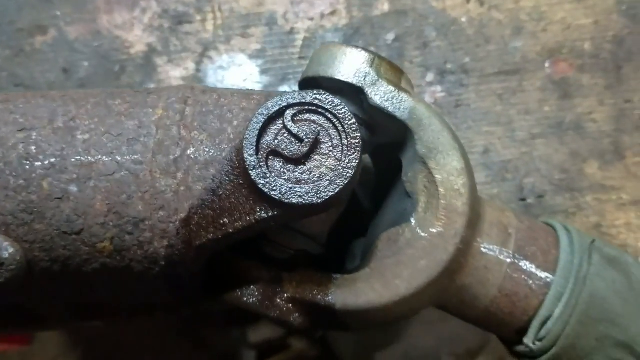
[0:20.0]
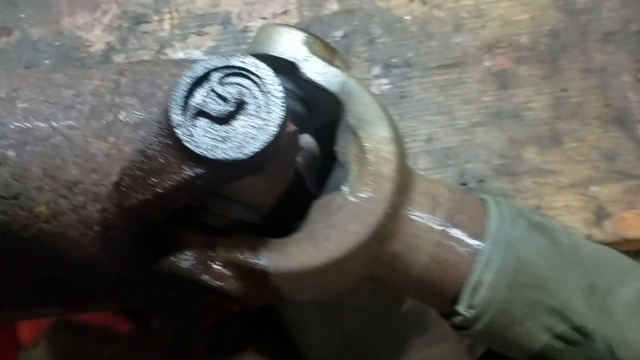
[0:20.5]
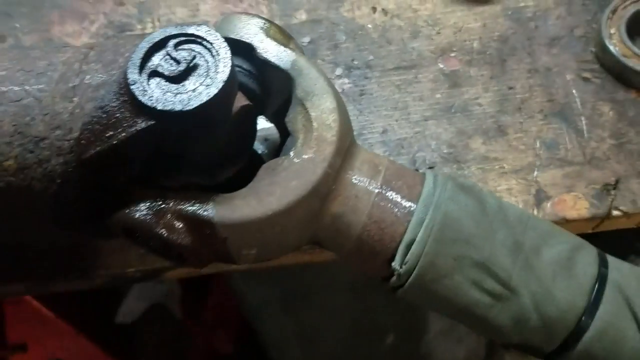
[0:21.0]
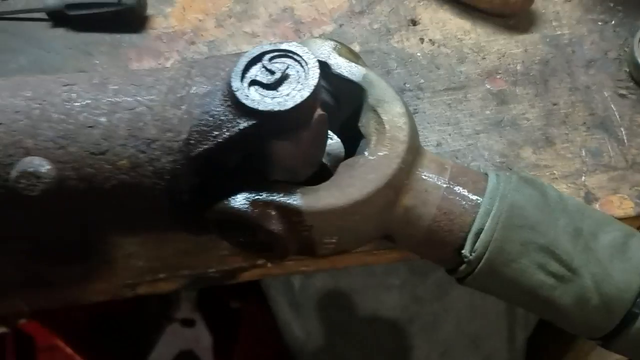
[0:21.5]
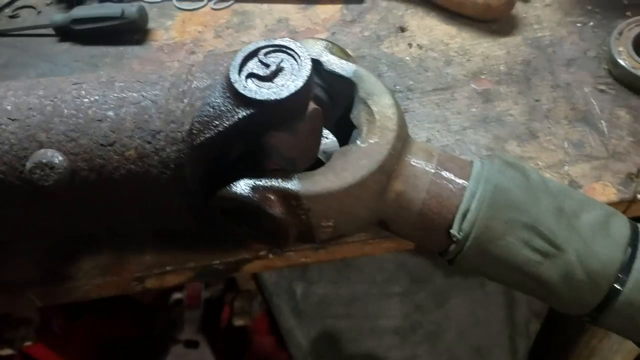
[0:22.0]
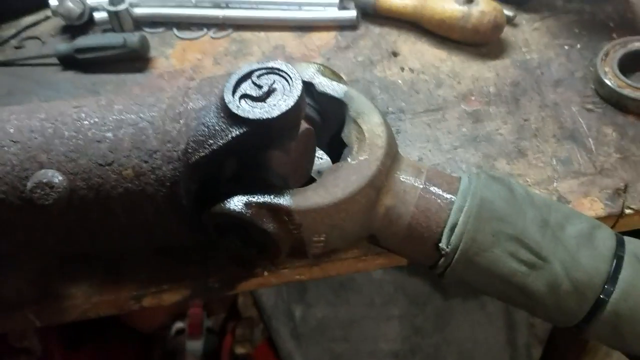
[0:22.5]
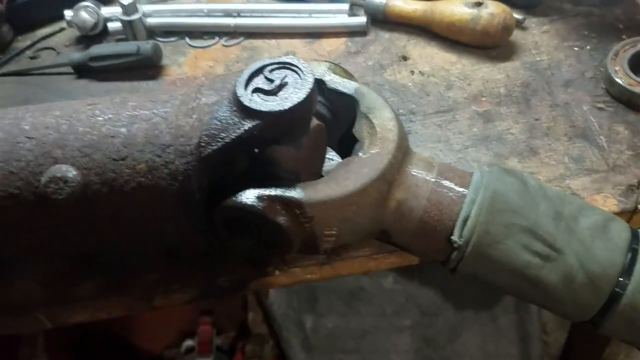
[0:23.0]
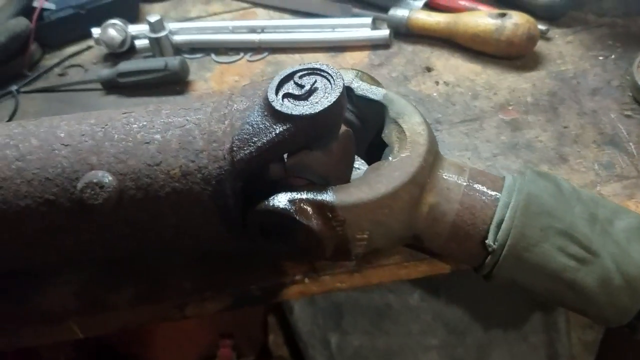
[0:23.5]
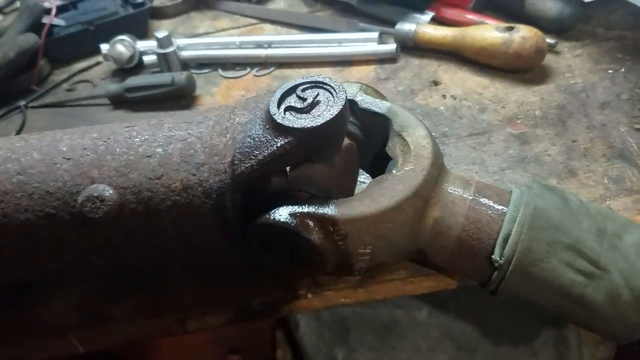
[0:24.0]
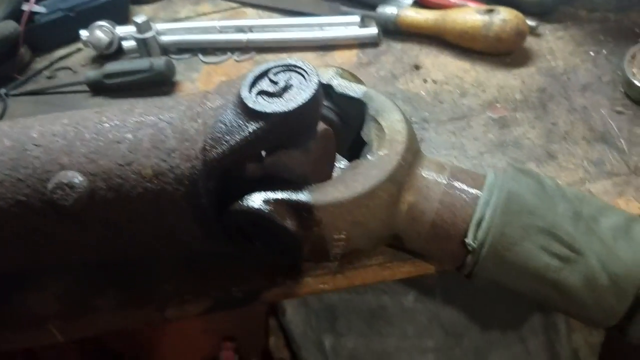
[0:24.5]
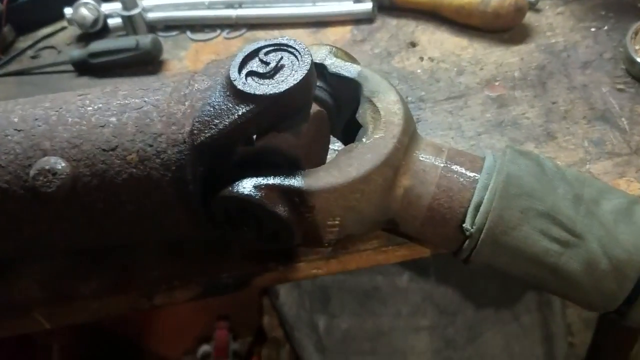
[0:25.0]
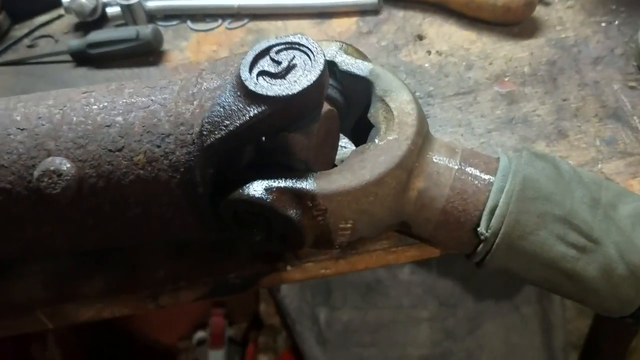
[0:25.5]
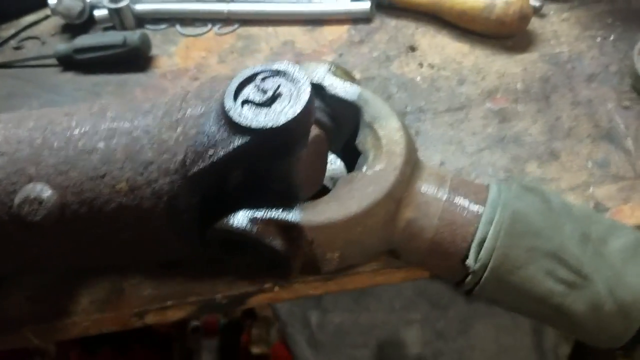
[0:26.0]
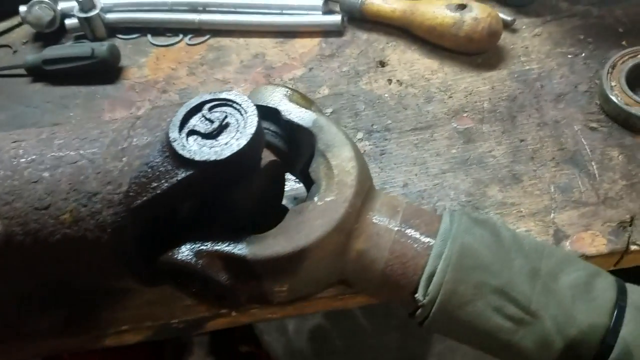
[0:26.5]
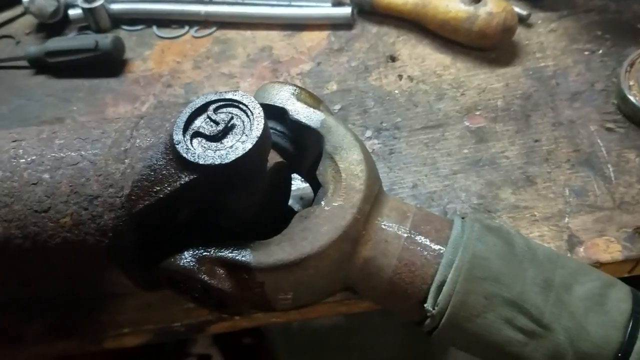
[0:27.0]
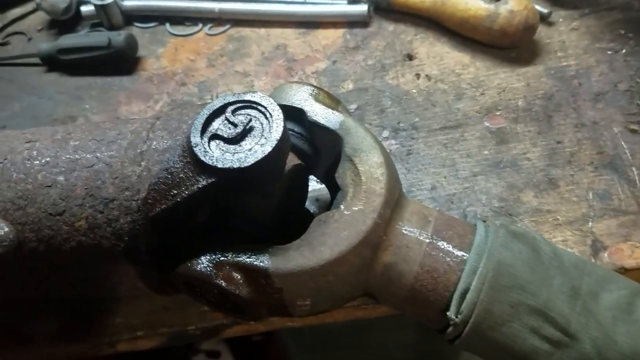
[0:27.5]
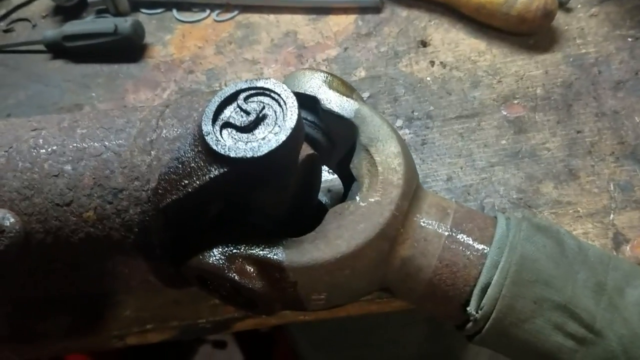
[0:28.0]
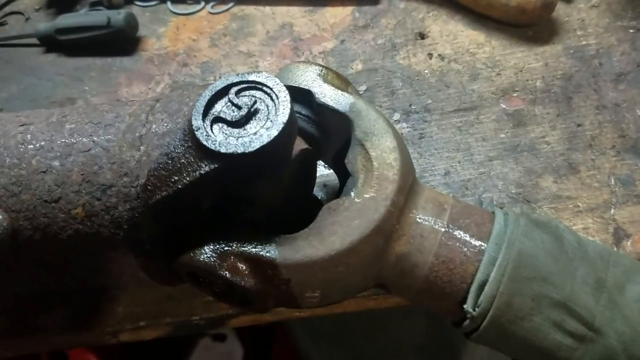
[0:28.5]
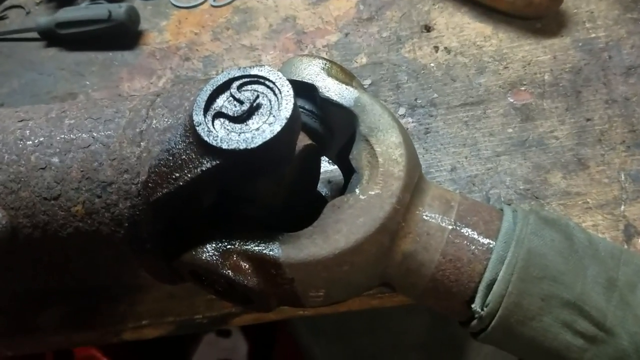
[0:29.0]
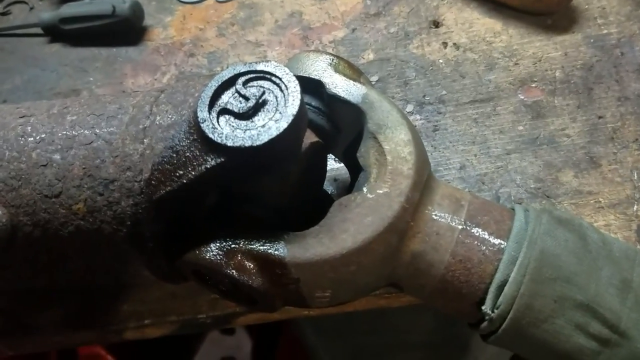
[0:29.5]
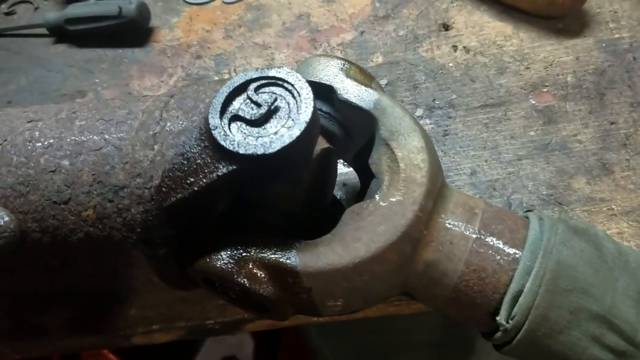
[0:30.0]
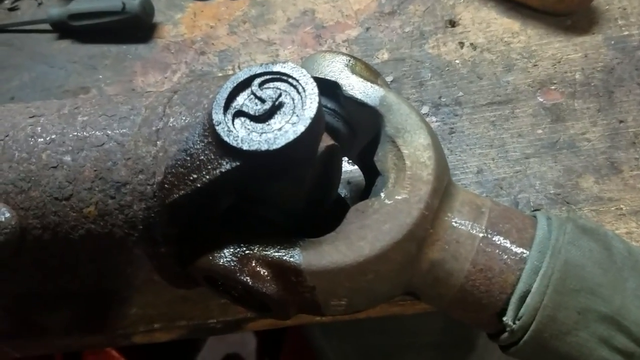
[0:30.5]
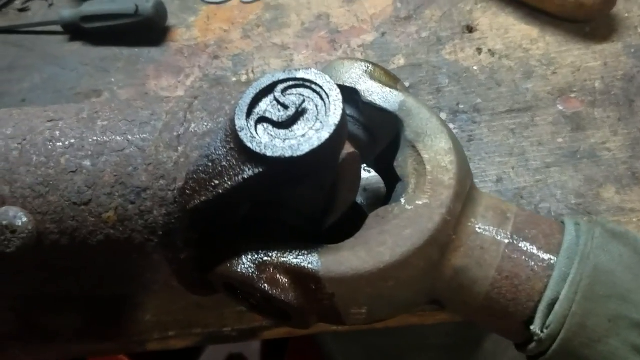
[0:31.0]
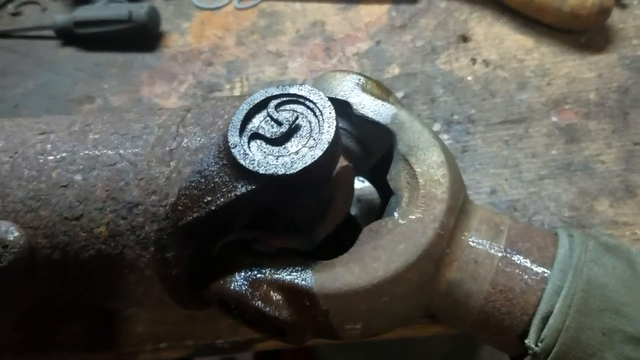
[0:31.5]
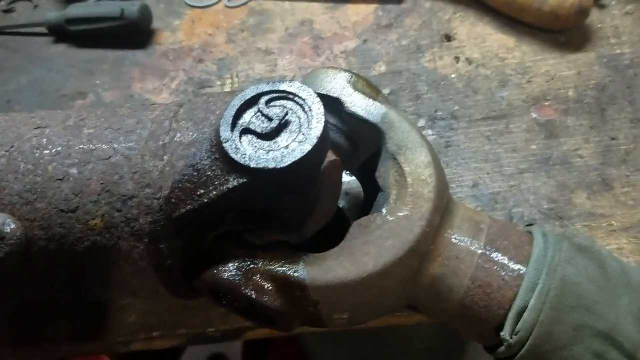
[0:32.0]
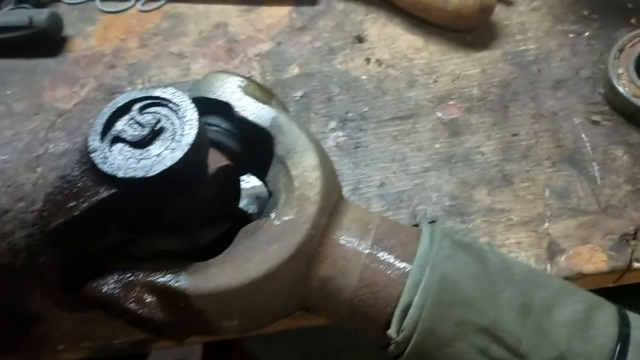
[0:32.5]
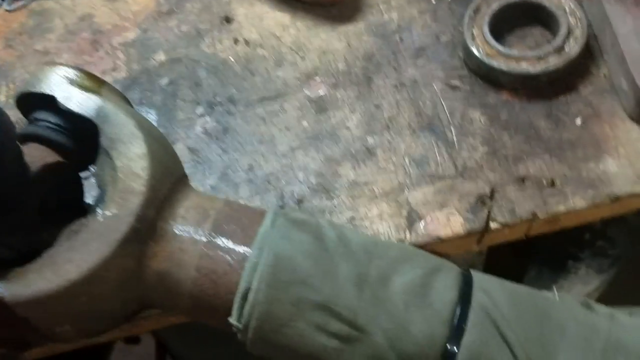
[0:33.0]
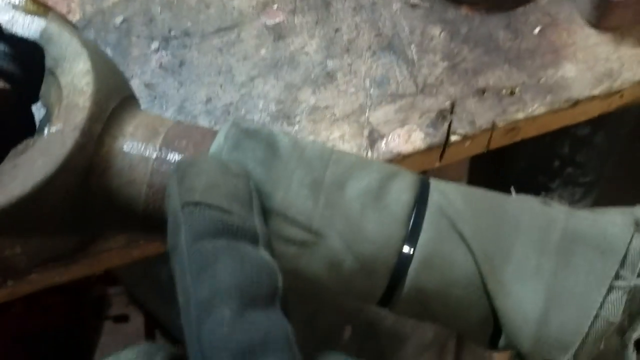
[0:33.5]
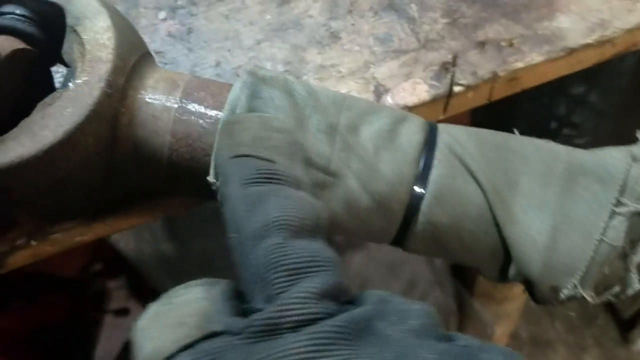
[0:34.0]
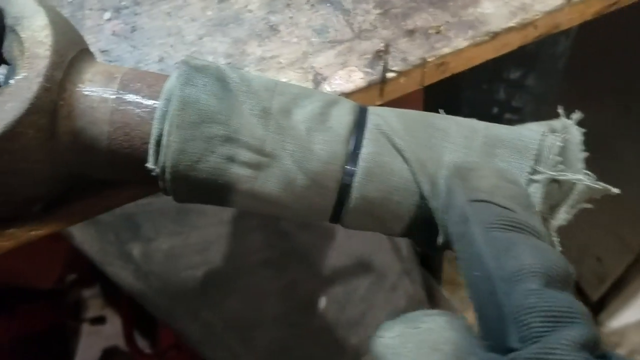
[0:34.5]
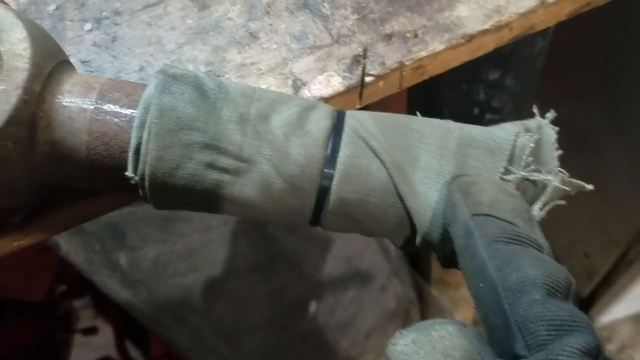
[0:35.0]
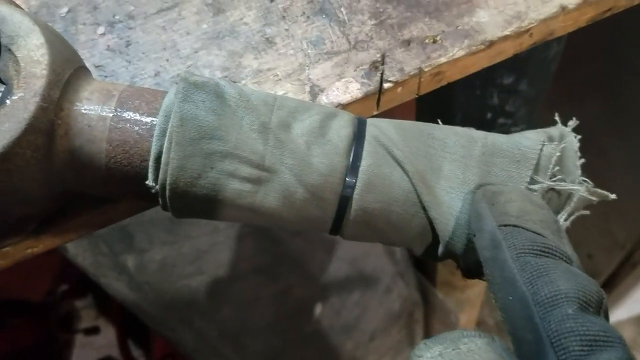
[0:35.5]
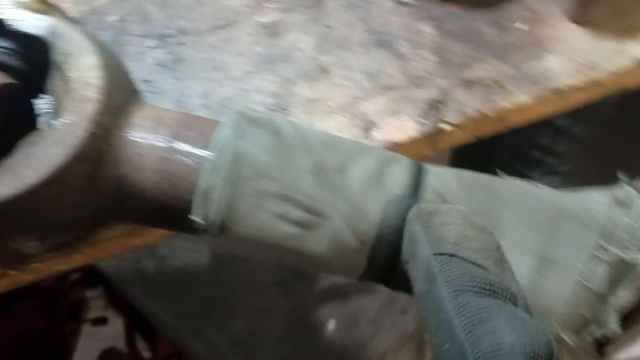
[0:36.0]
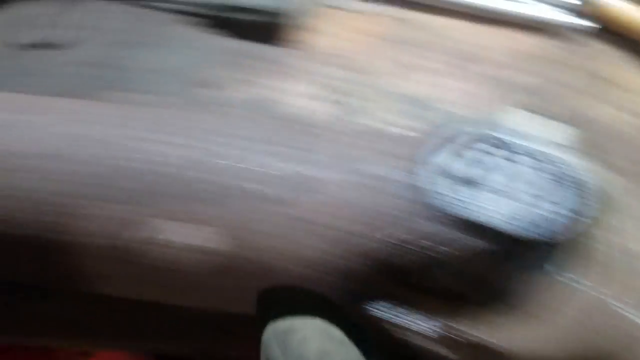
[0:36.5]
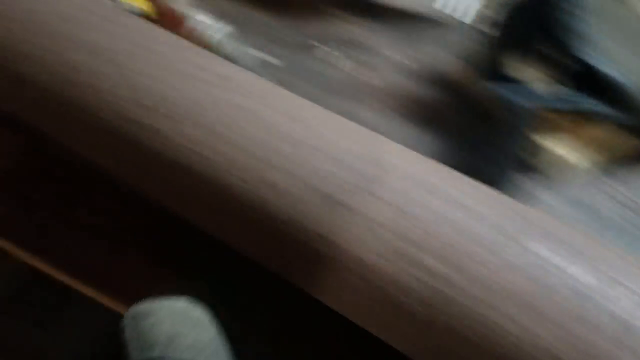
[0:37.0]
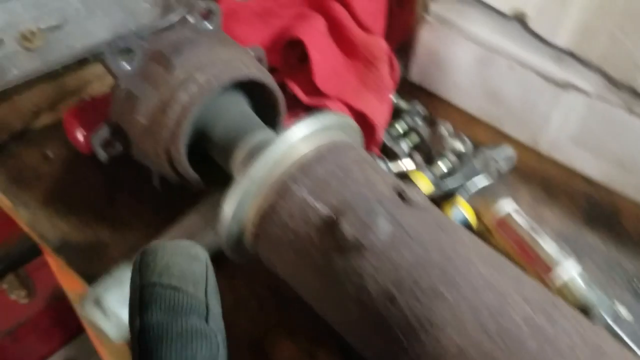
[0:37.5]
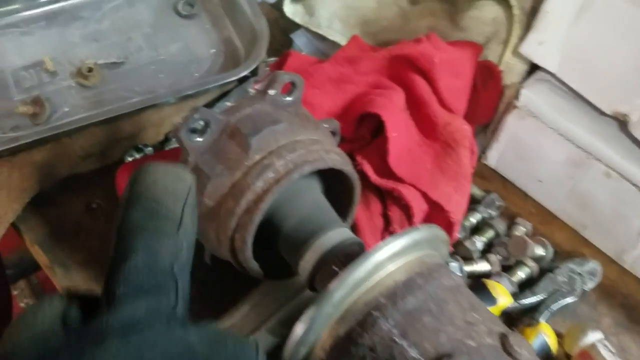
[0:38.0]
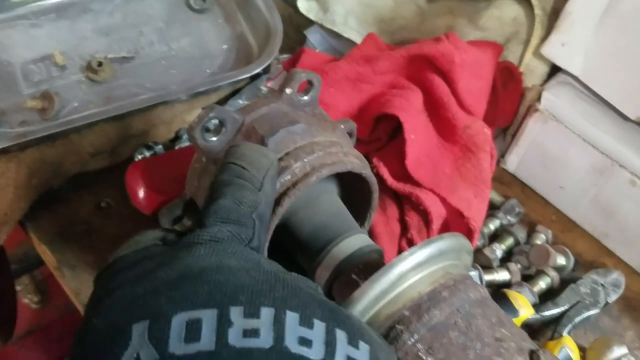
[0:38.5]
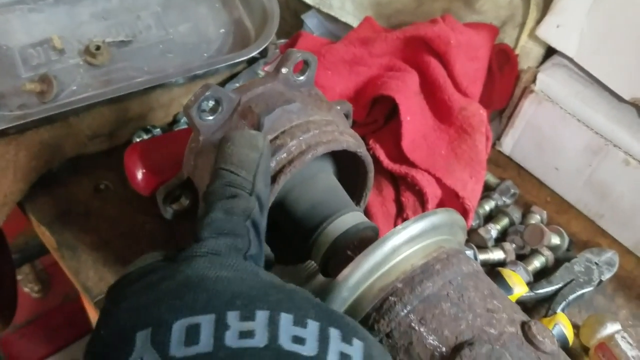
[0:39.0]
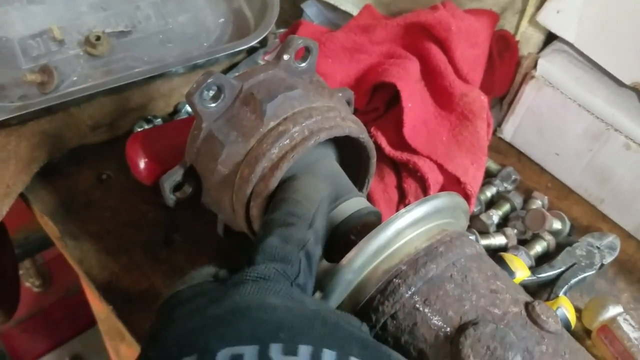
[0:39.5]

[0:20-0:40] An overhead view shows the metal item resting on top of a wooden brick bench area. The camera pans to the right, showing a green cloth wrapped around the right end of the device, and then slowly pans out. The green cloth is fixed to the pipe with a black band or strap. The camera focuses back on the center of the device from the front view, then comes closer with a more tilted overhead angle. There is more oil, or what appears to be some sort of lubricant, on the front of the device as well as on the tops and sides. The person takes the right side and wiggles it a bit, and the item lifts in the center. The camera pans to the right, where a gloved hand and gloved middle finger appear; the middle finger touches the right side where the cloth is wrapped around the item and runs along the length of the cloth from left to right, stopping at the end.